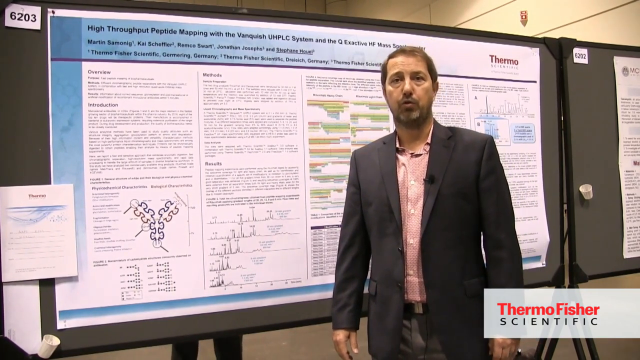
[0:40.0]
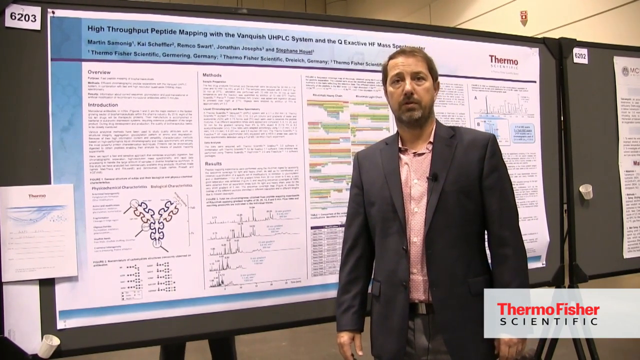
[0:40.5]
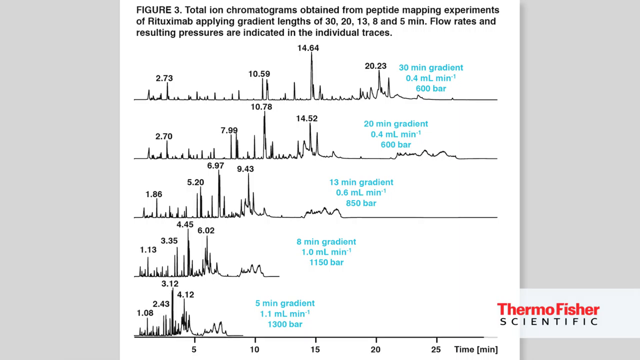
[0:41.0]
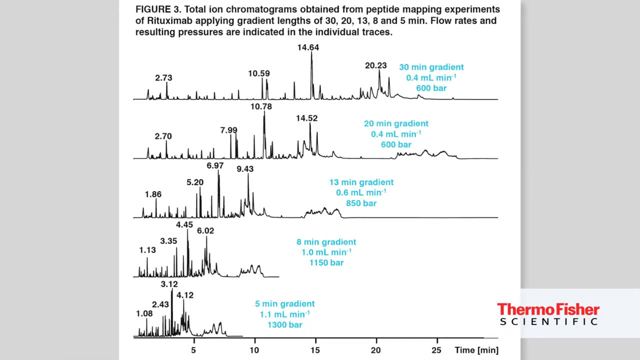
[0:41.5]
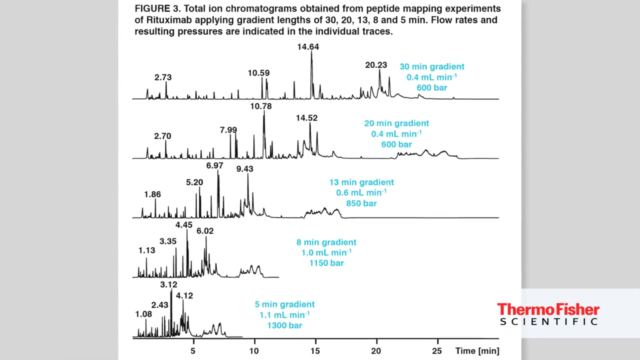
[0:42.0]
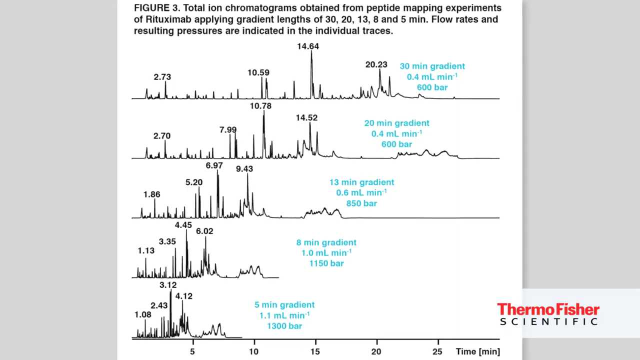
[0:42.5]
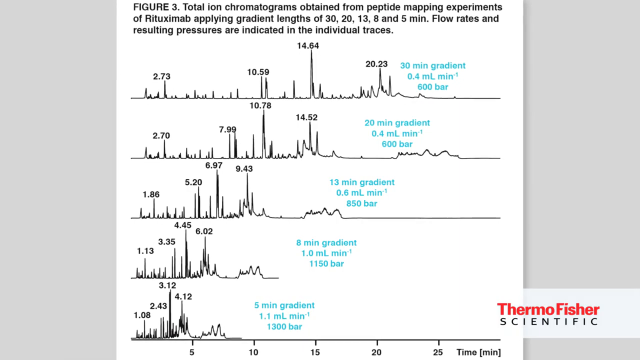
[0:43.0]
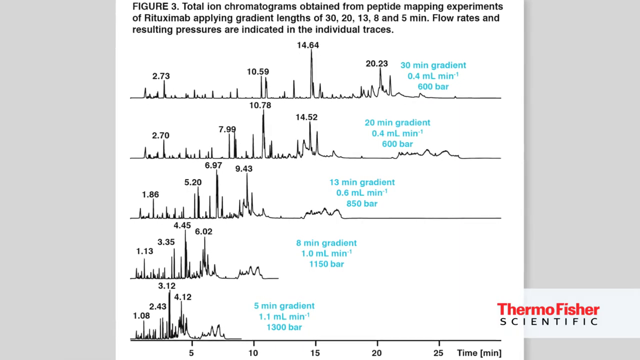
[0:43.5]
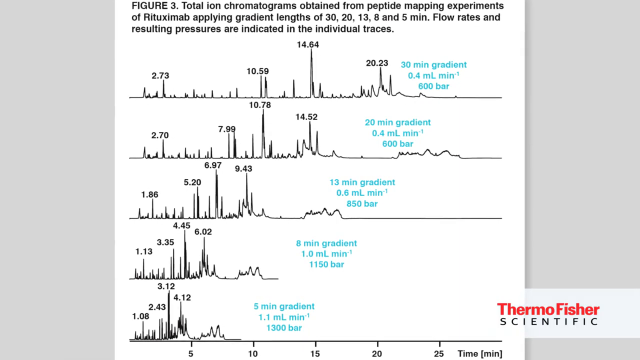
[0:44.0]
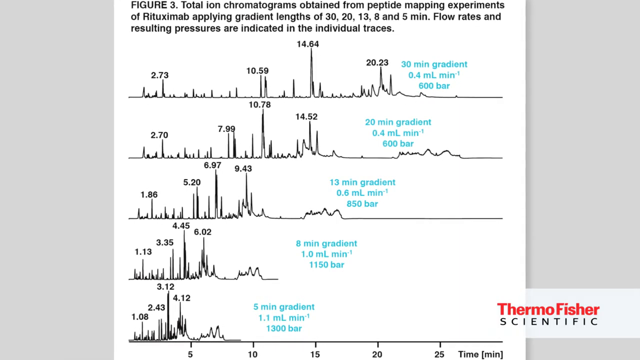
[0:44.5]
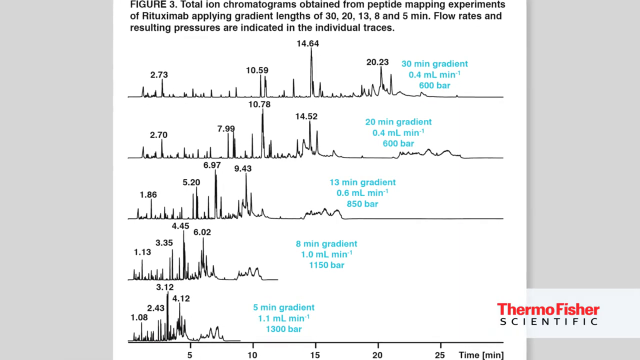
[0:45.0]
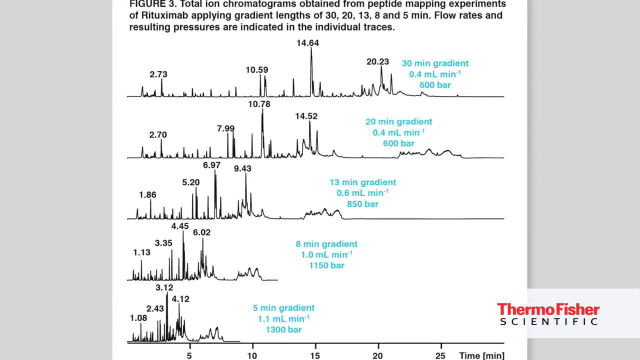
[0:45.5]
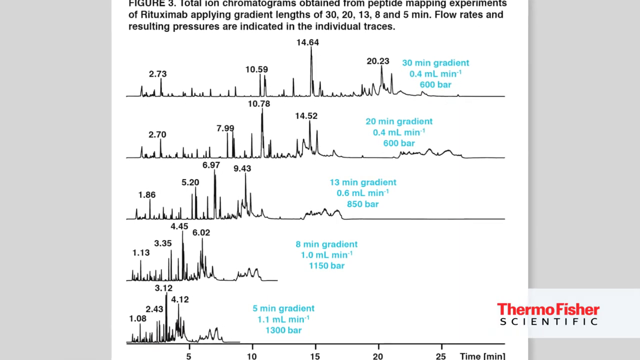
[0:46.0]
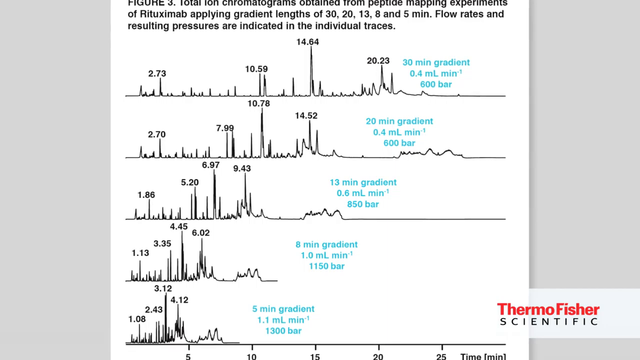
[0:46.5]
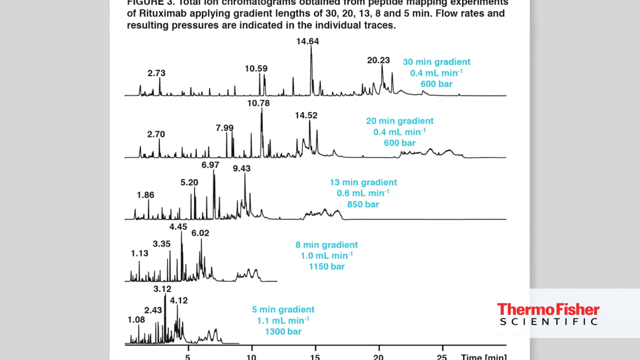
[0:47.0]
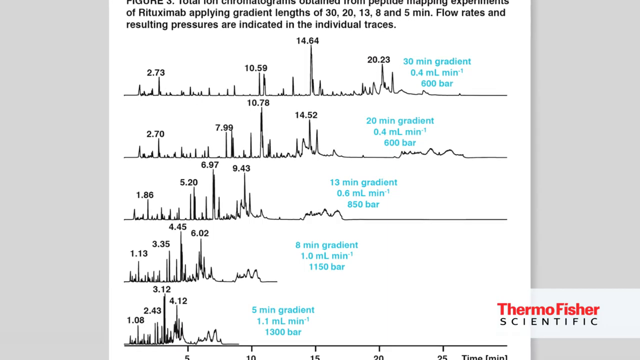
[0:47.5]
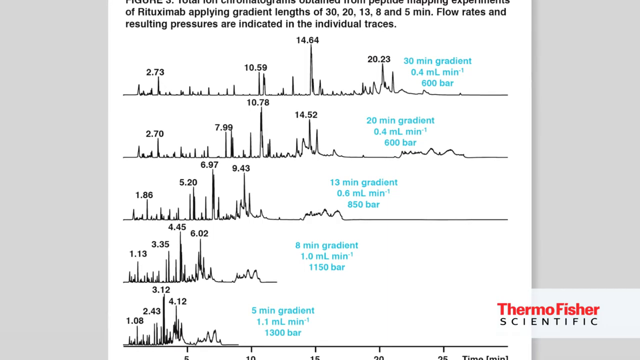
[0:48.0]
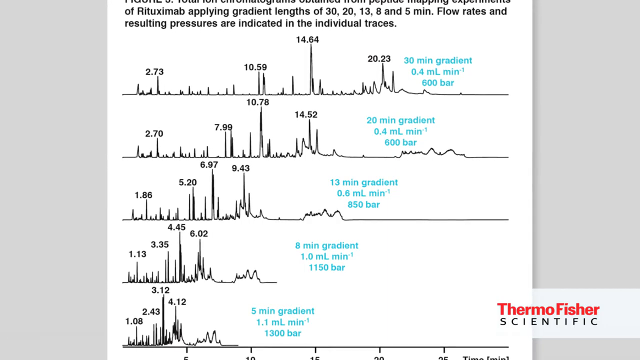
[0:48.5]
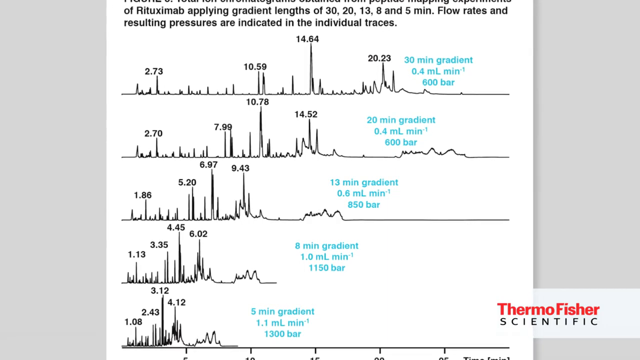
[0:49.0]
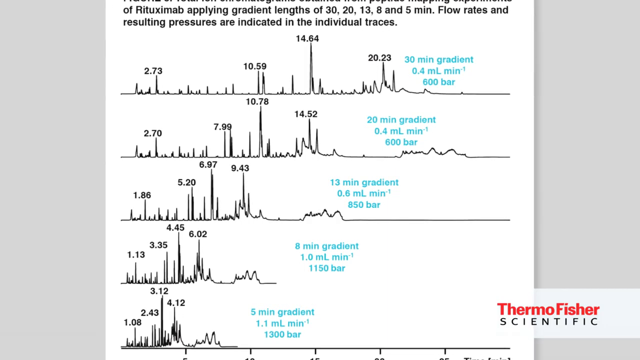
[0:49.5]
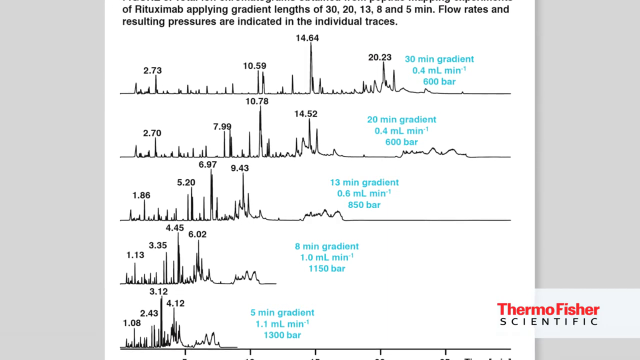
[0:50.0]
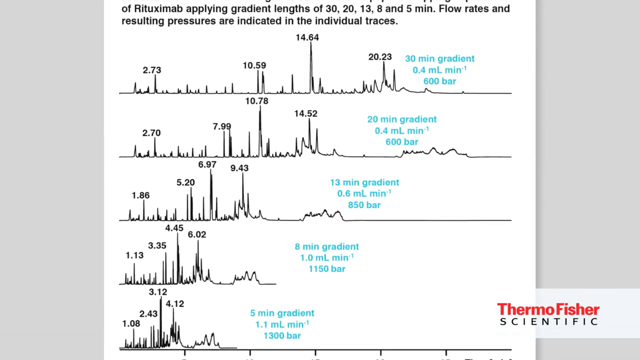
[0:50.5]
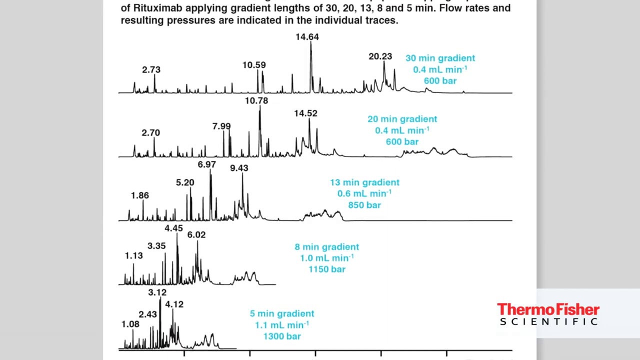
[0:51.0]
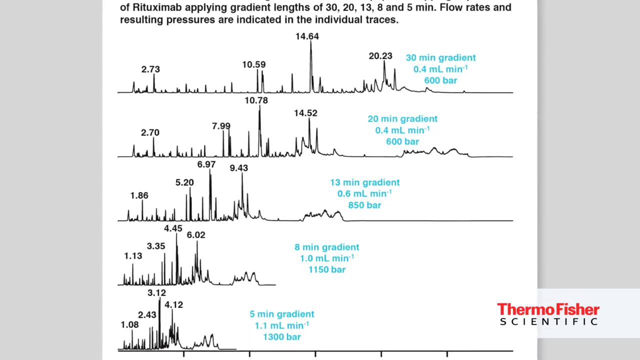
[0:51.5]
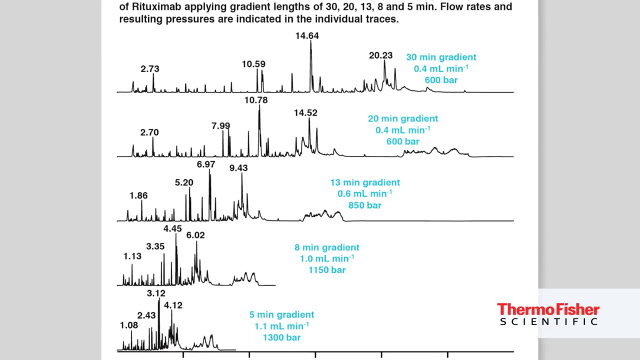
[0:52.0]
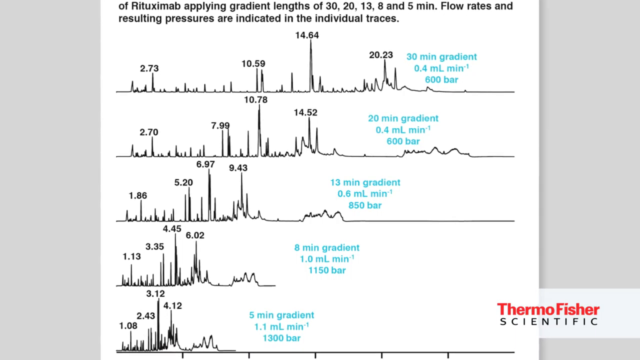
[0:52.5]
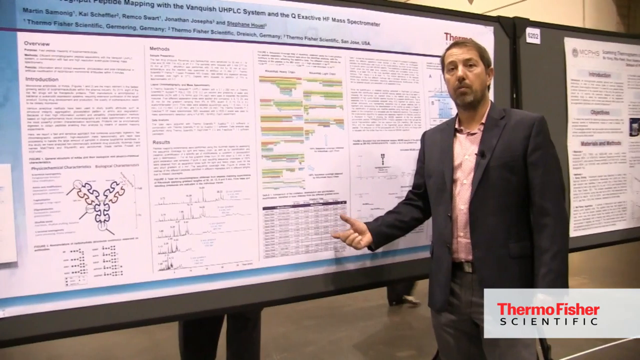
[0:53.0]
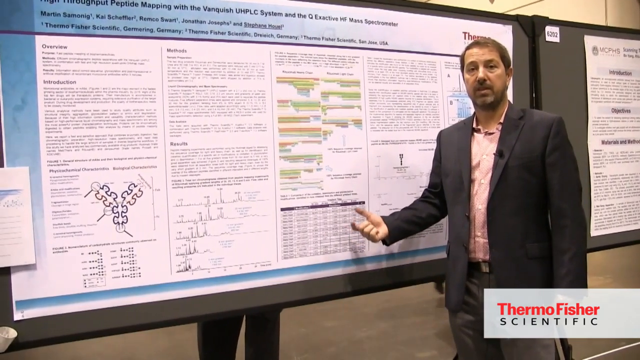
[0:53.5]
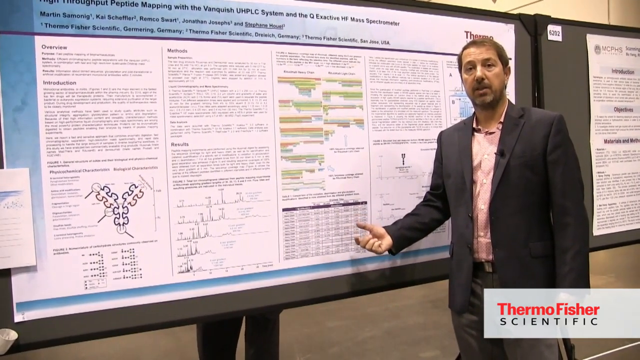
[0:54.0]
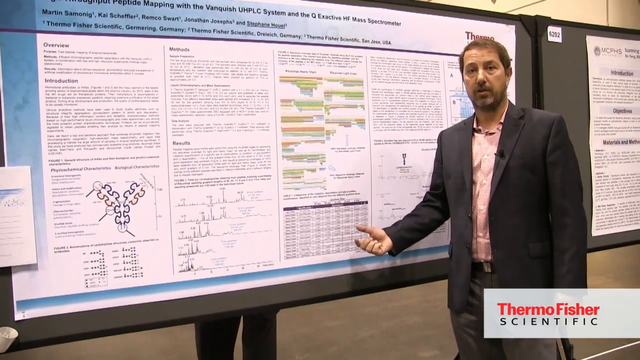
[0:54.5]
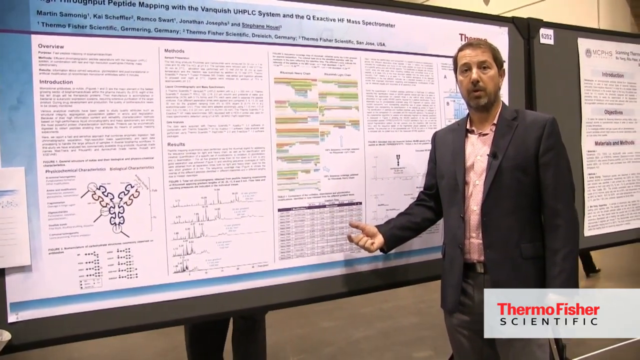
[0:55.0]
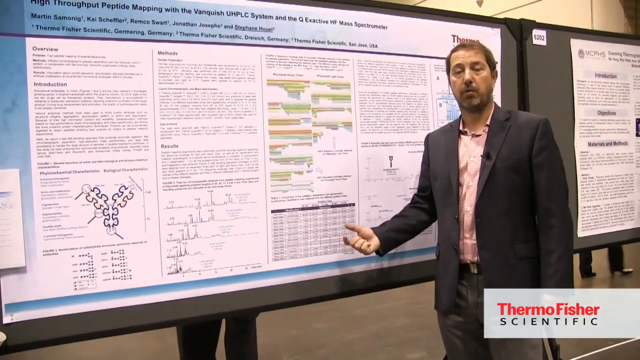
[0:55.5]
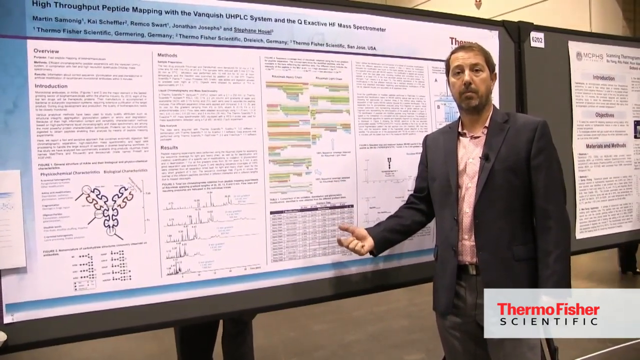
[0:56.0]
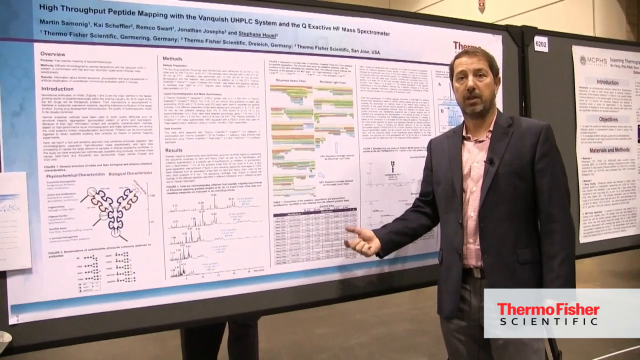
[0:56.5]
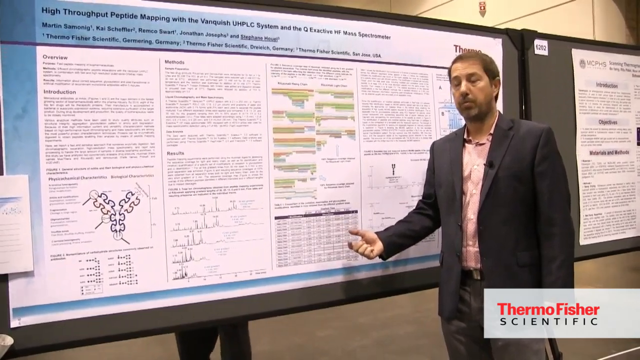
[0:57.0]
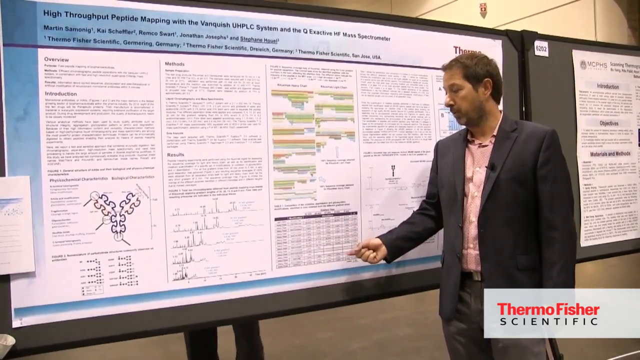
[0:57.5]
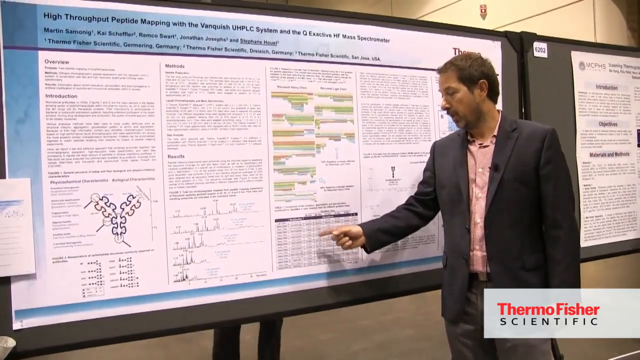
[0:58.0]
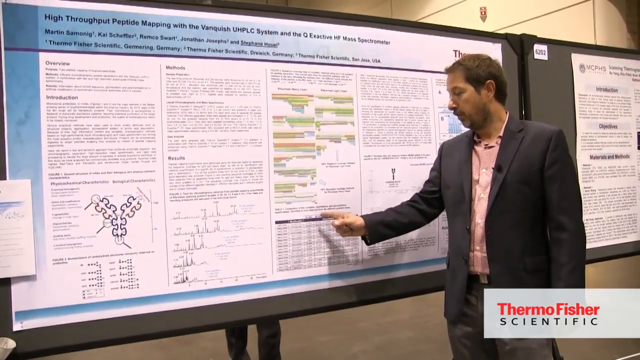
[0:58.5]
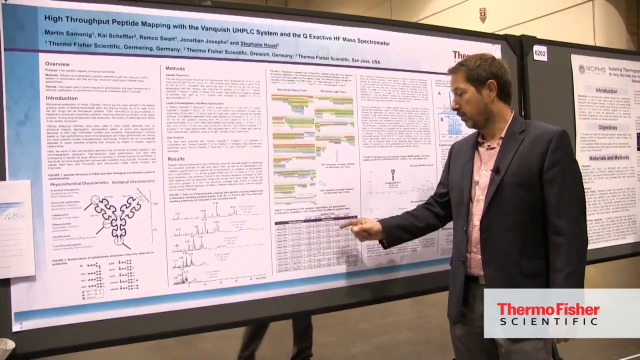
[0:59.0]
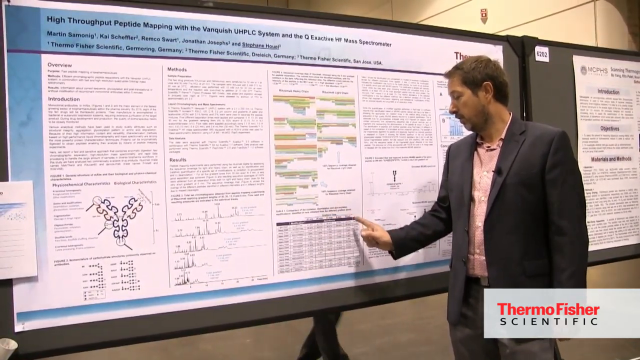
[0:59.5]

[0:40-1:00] Figure three of the process appears, showing total ion chromatograms obtained from peptide mapping experiments. The chart shows different flow rates resulting in different pressures.